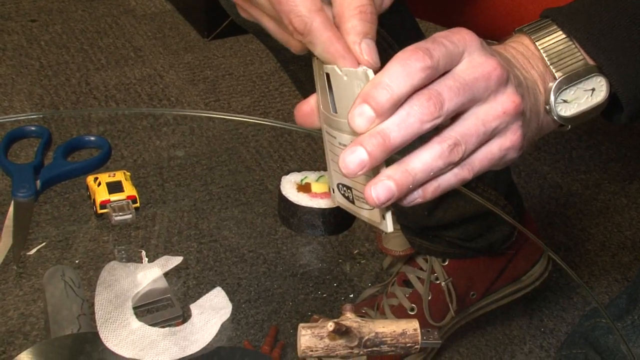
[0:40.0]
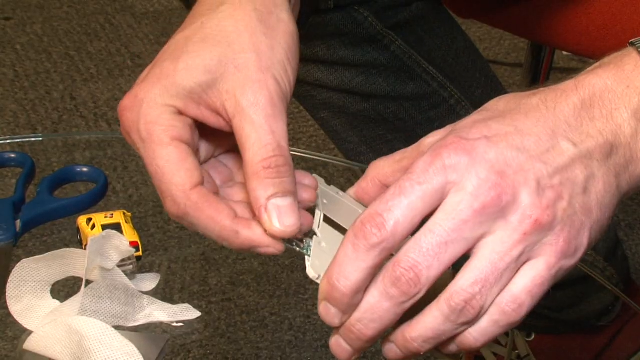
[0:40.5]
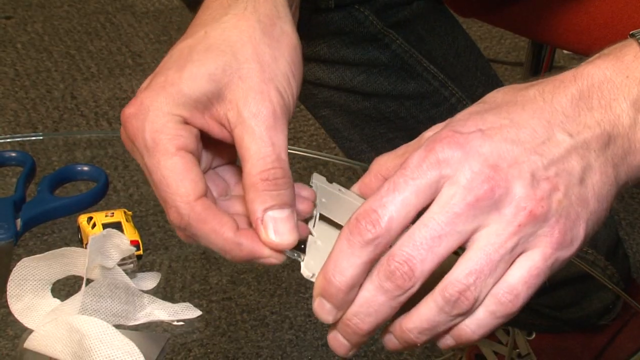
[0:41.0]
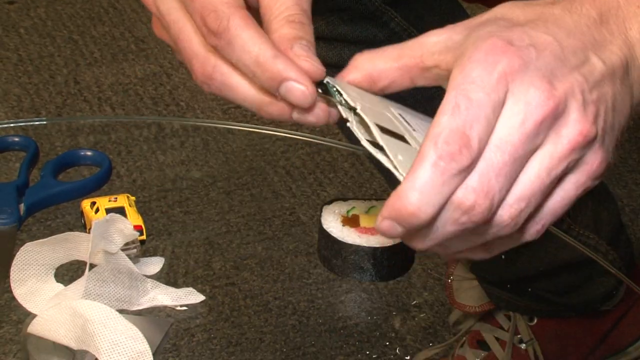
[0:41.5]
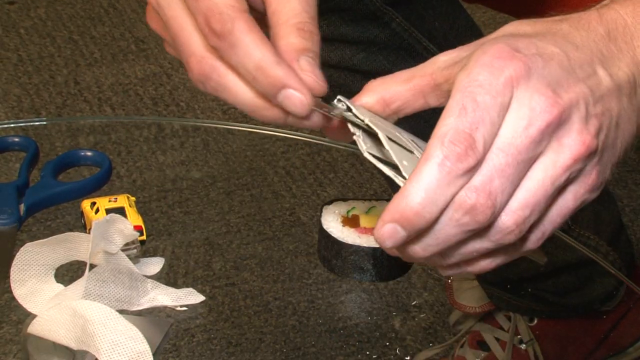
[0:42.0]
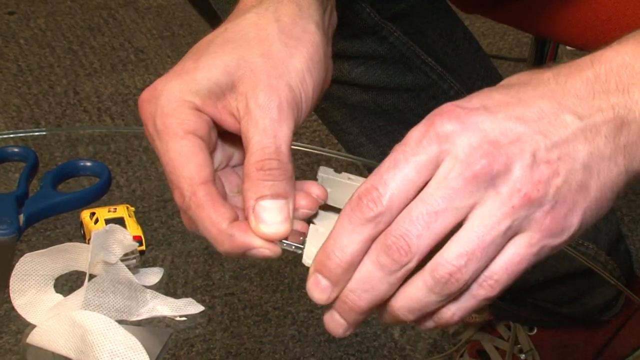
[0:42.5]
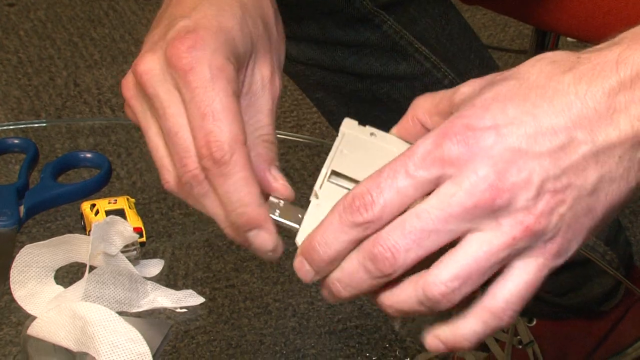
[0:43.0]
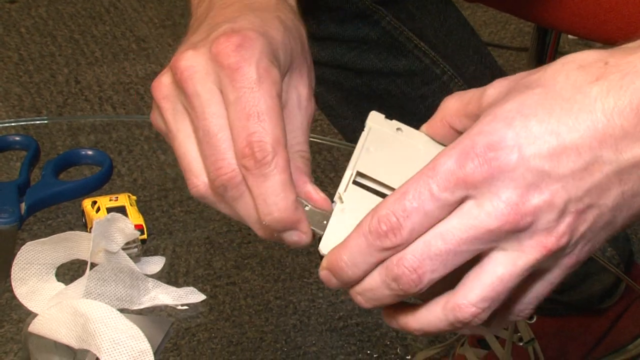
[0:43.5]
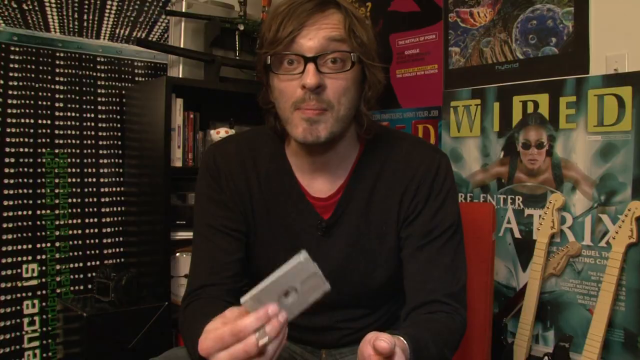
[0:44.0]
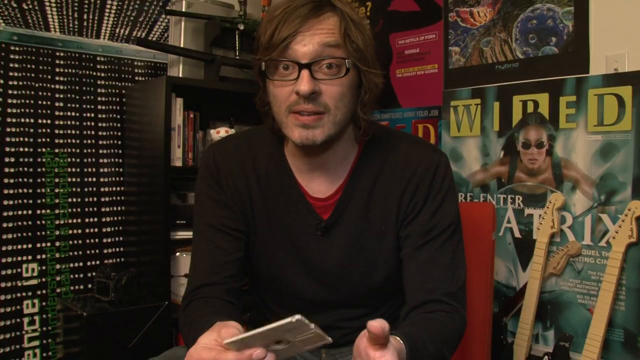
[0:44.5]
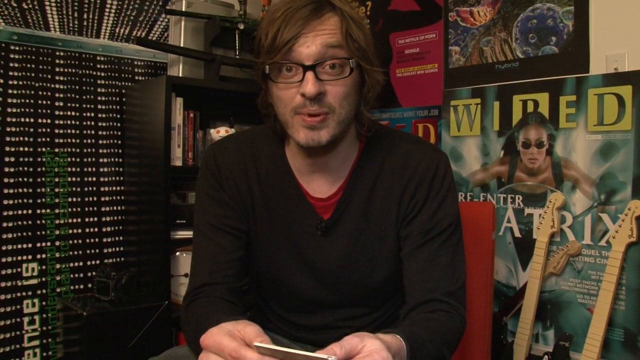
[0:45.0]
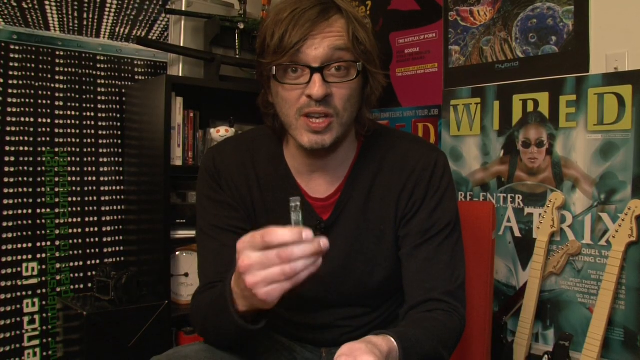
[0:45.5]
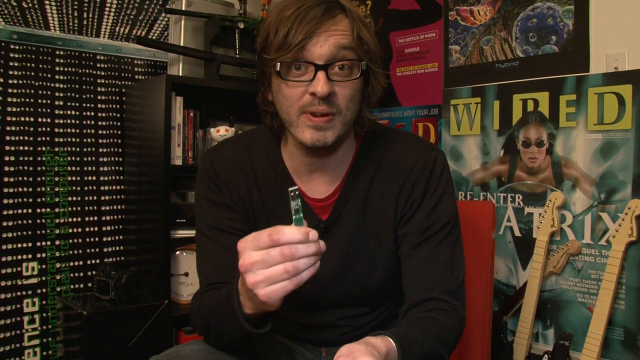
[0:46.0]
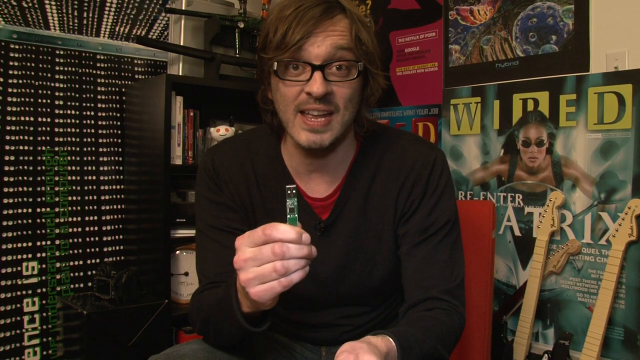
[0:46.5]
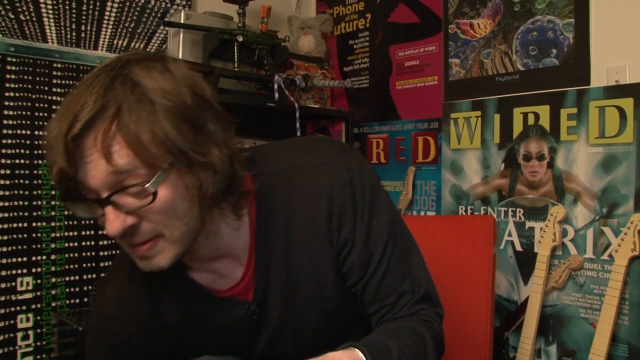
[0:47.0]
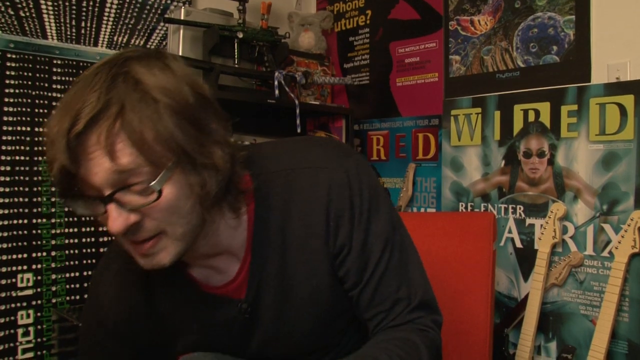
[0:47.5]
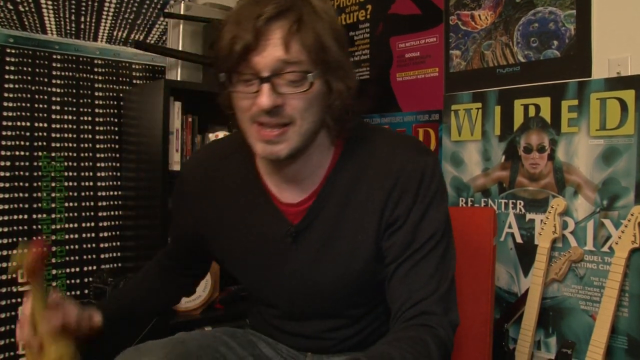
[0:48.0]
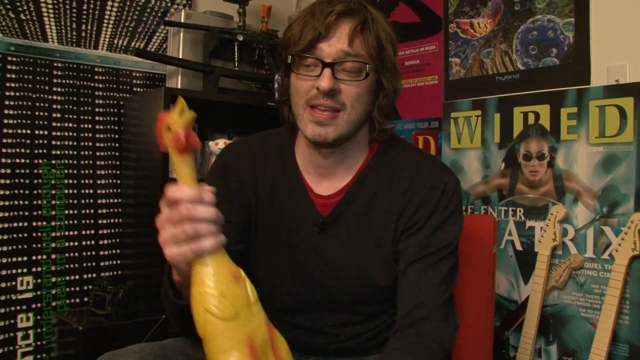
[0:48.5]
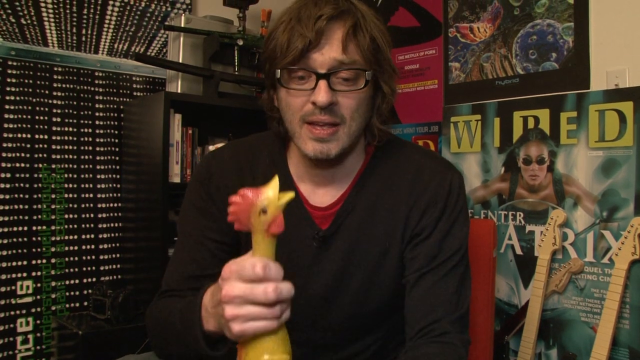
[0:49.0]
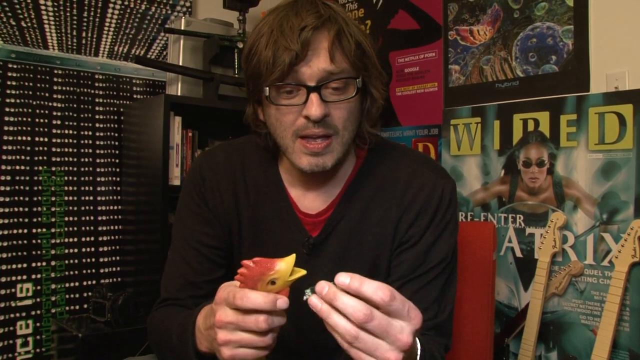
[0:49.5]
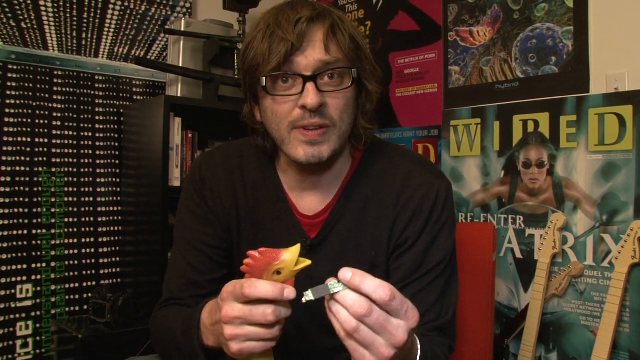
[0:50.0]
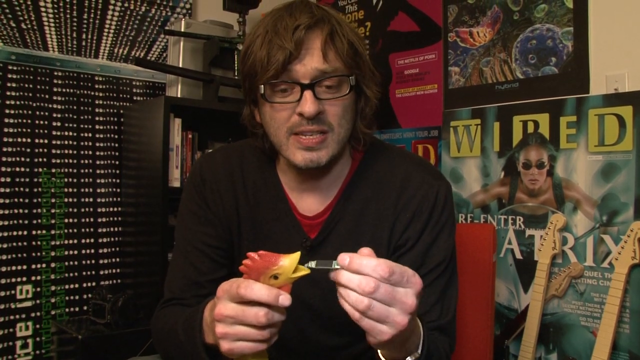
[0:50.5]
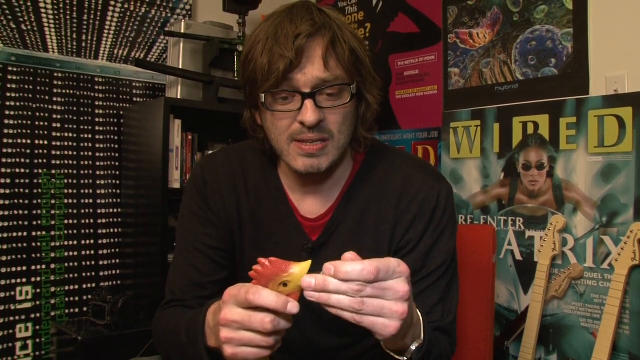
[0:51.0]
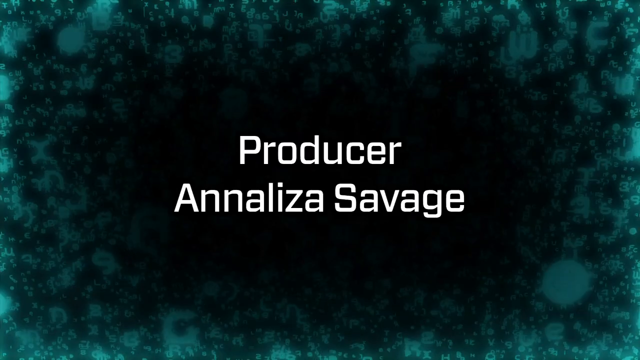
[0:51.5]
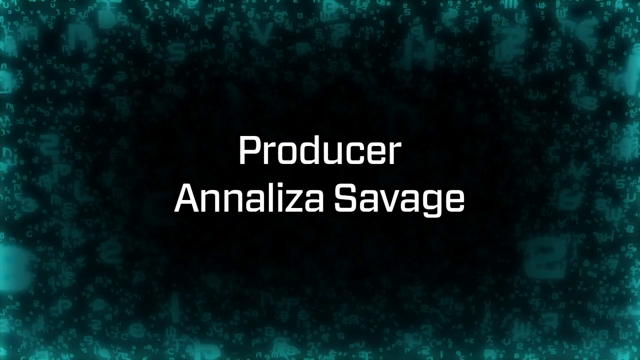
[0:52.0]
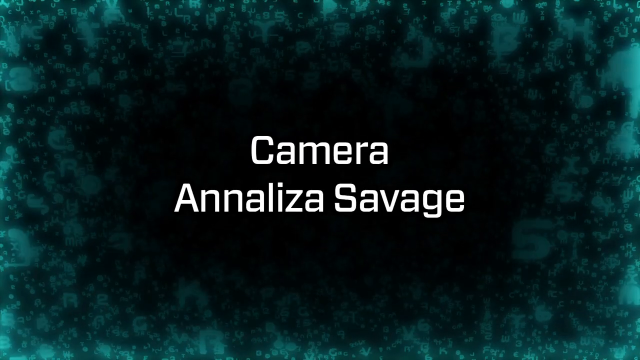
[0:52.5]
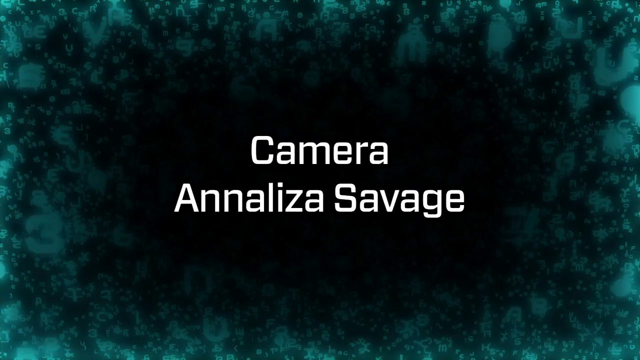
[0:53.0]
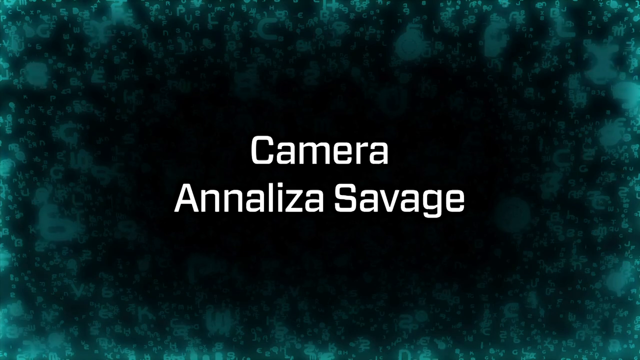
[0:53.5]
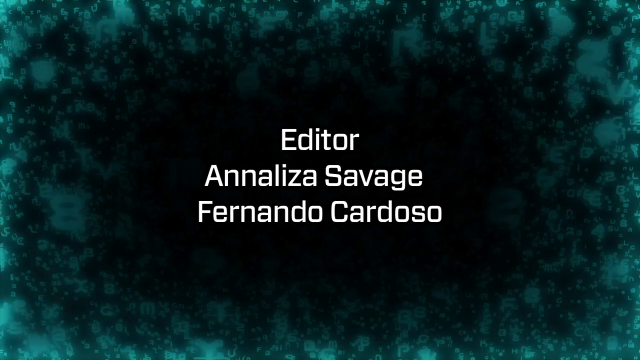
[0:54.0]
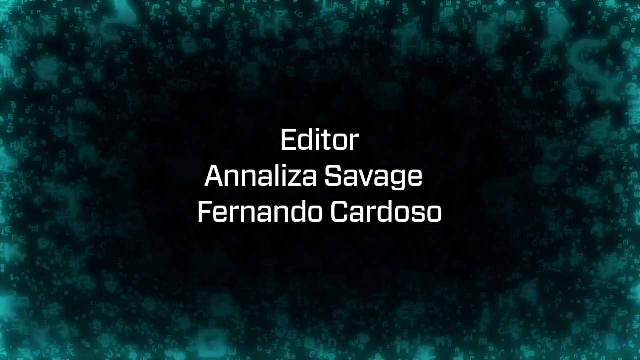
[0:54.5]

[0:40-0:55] The person fixes the USB port in the paper box. He holds toys in his hand and shows that he has put the audio port on the toy's mouth. Text then appears with some names, possibly credits for the producer and others: "producer analyzer, camera analyzer, editor analyzer".